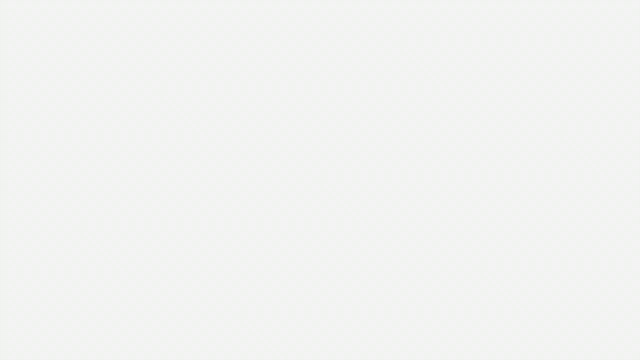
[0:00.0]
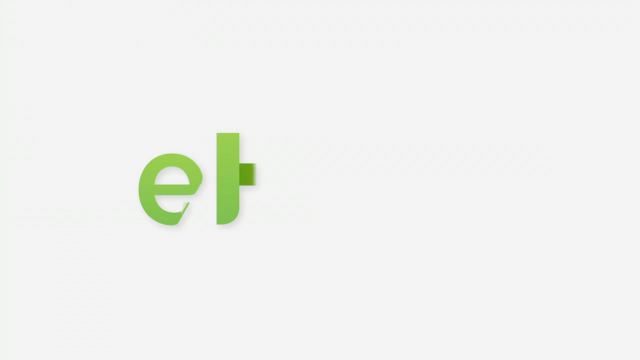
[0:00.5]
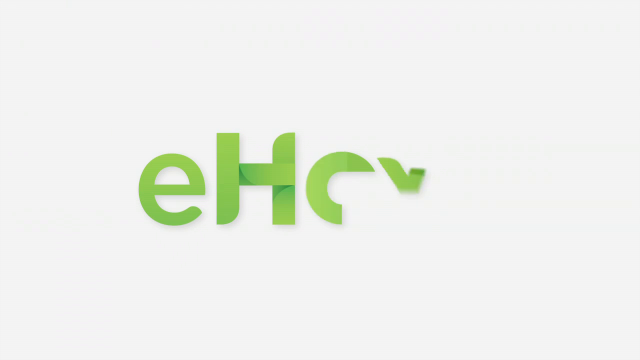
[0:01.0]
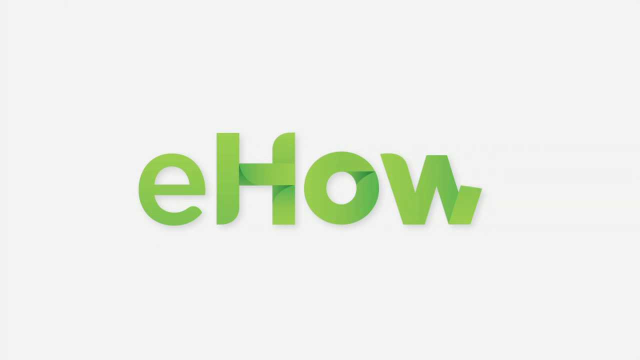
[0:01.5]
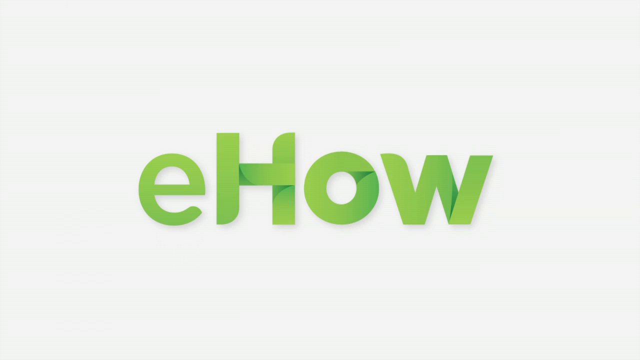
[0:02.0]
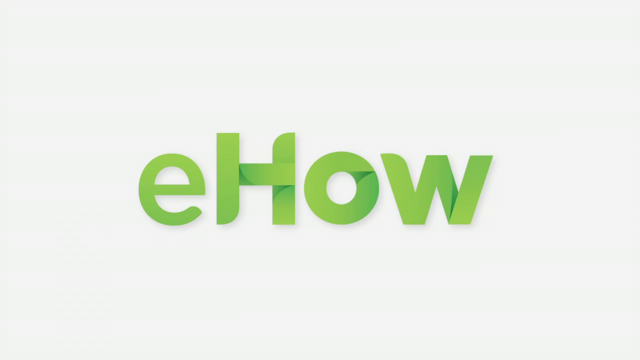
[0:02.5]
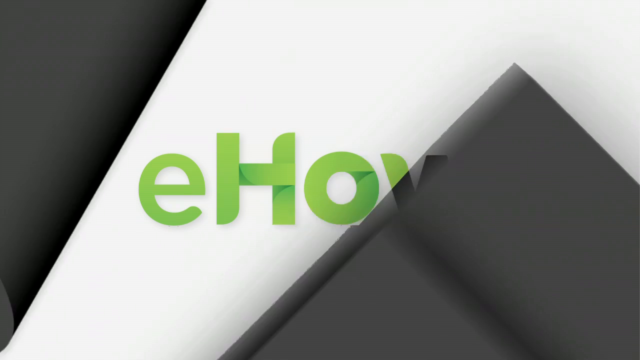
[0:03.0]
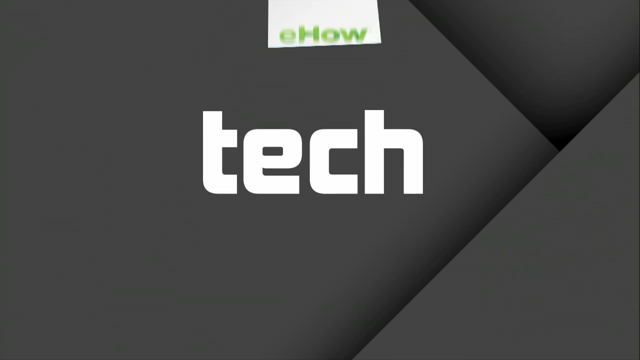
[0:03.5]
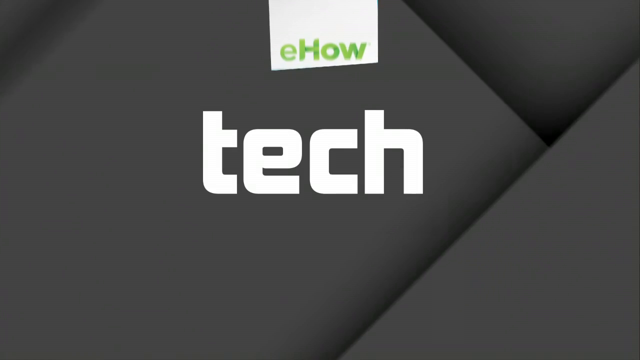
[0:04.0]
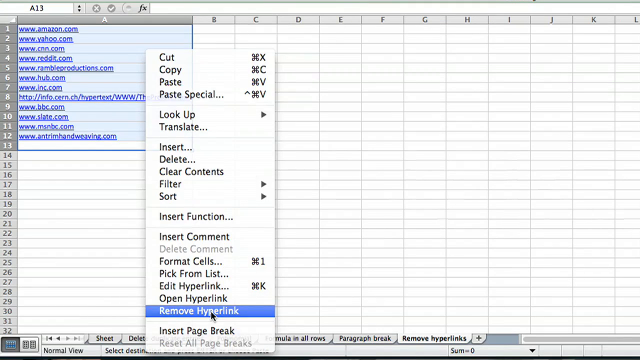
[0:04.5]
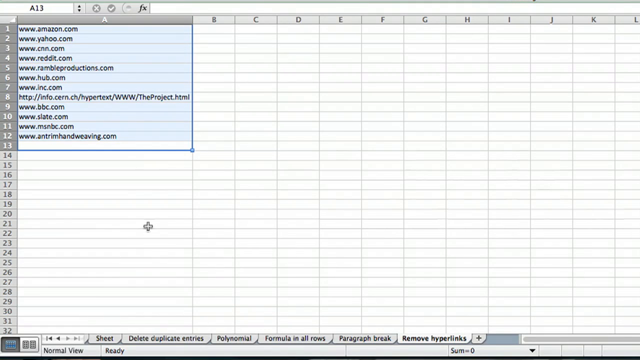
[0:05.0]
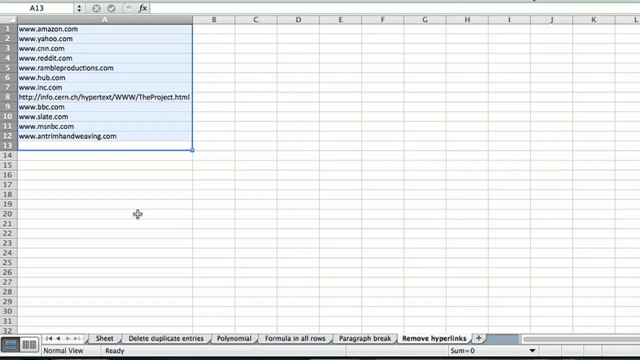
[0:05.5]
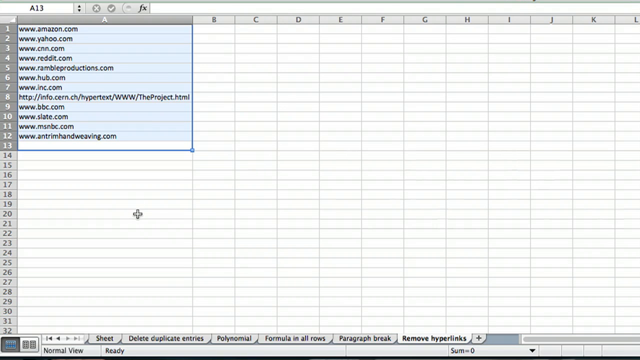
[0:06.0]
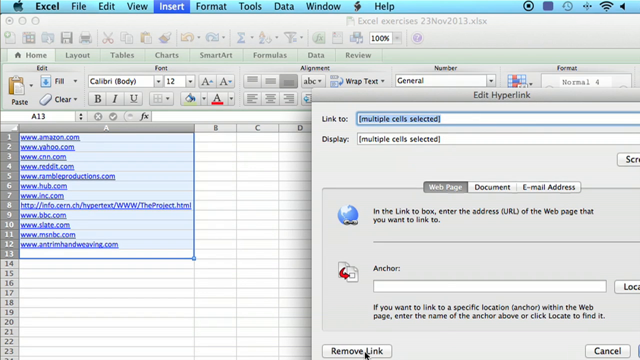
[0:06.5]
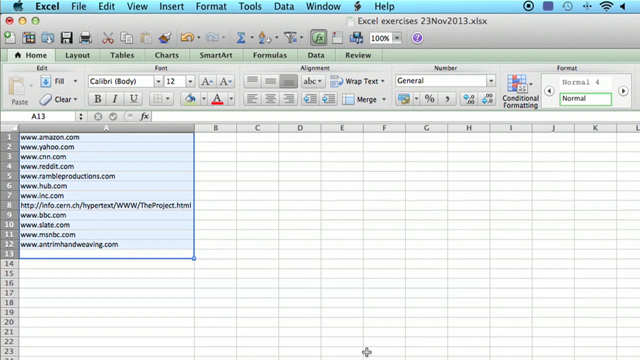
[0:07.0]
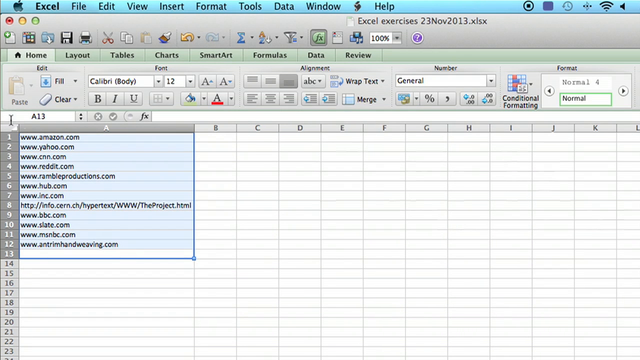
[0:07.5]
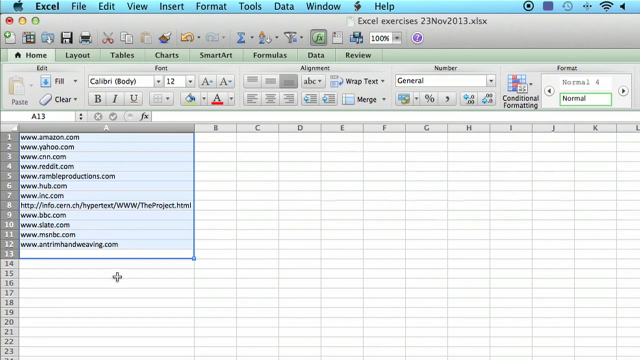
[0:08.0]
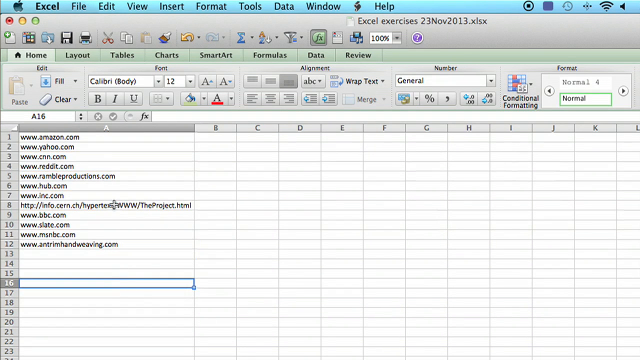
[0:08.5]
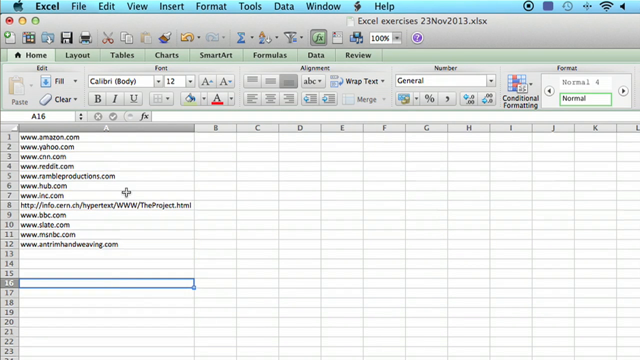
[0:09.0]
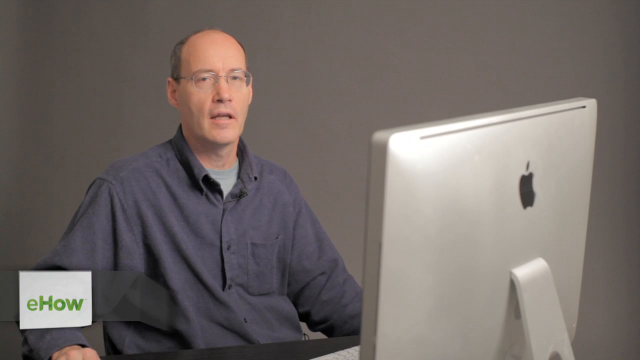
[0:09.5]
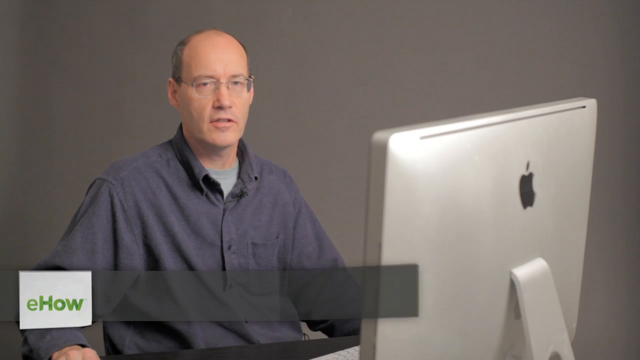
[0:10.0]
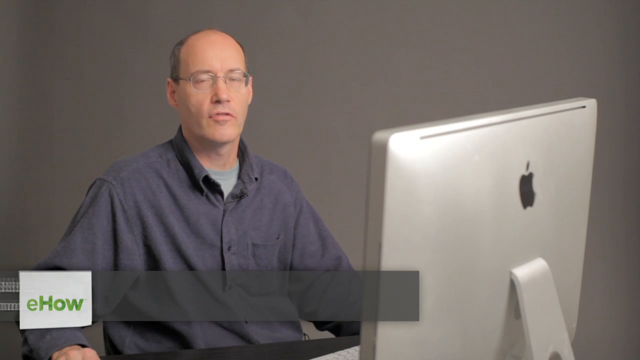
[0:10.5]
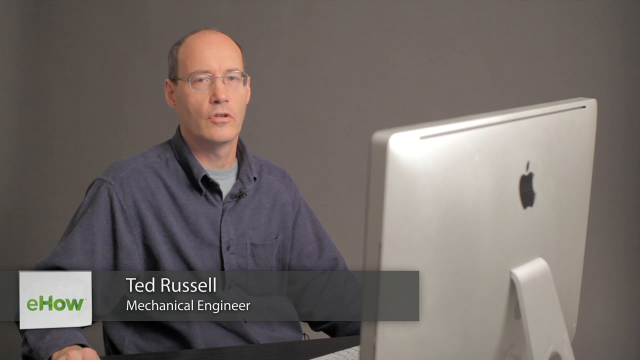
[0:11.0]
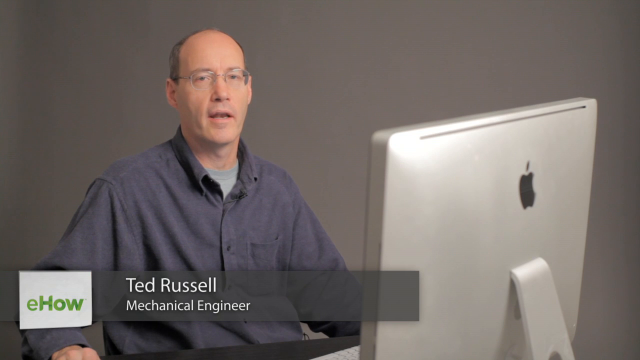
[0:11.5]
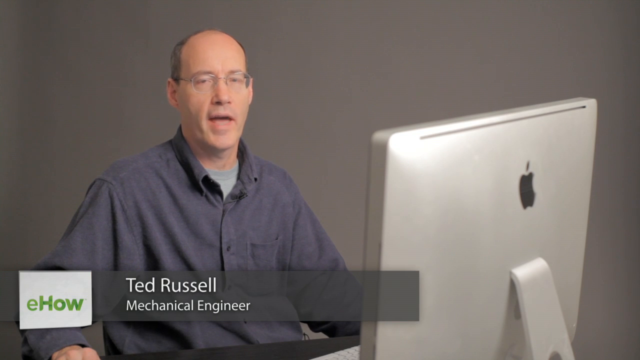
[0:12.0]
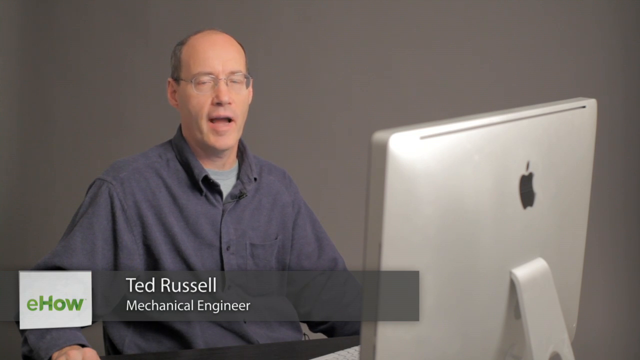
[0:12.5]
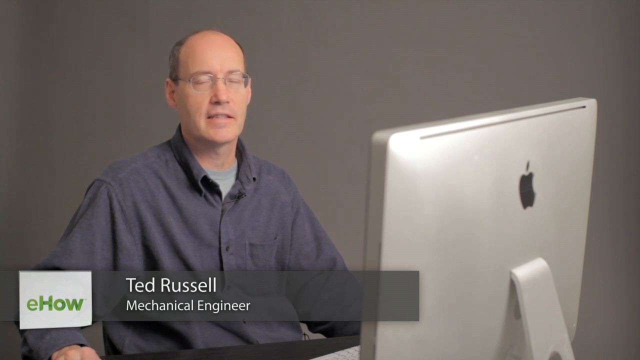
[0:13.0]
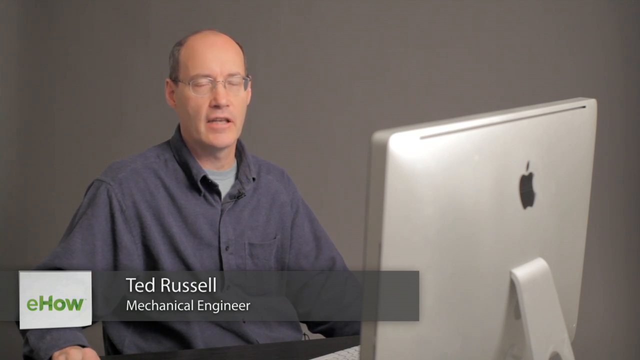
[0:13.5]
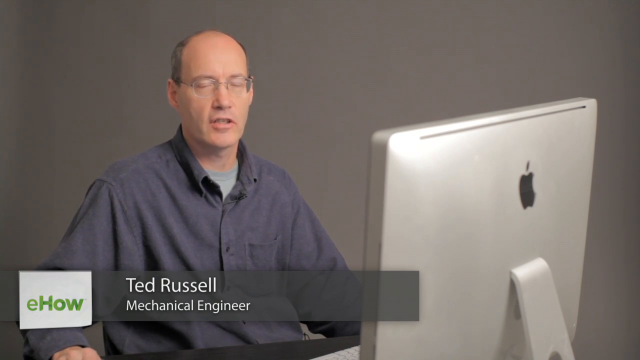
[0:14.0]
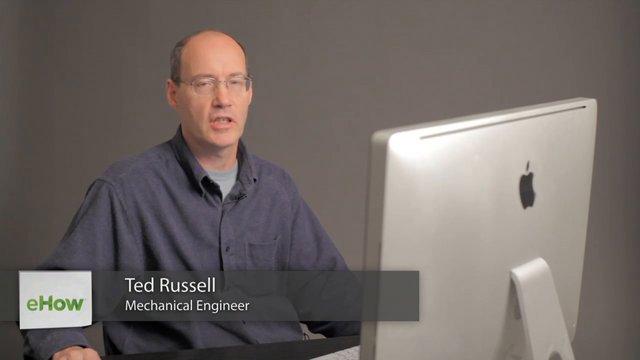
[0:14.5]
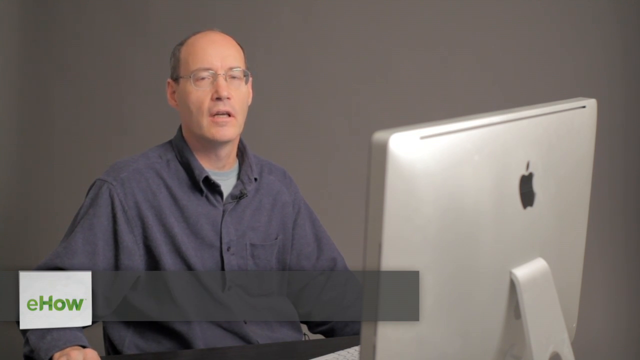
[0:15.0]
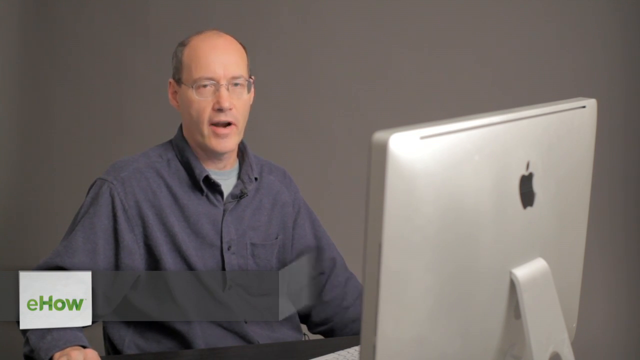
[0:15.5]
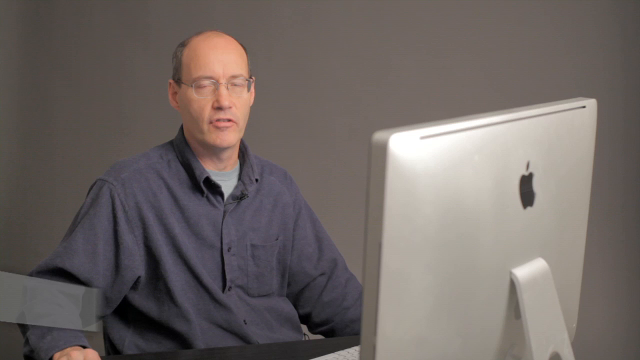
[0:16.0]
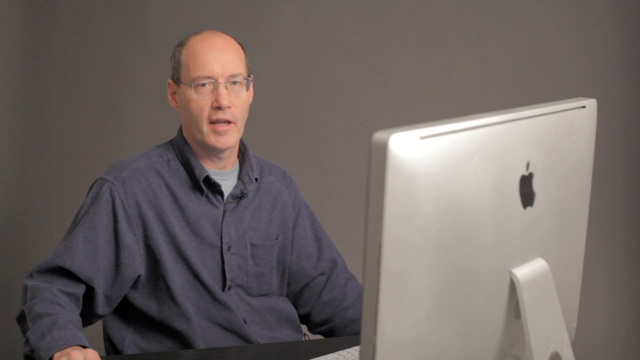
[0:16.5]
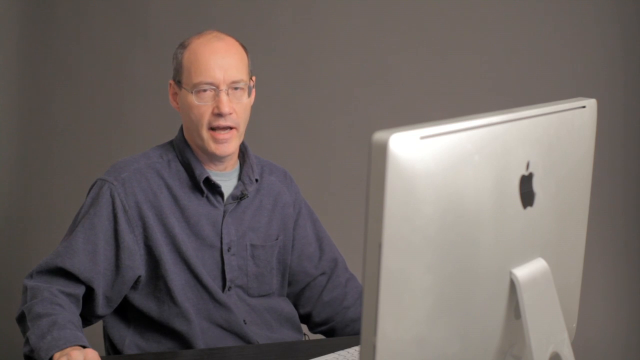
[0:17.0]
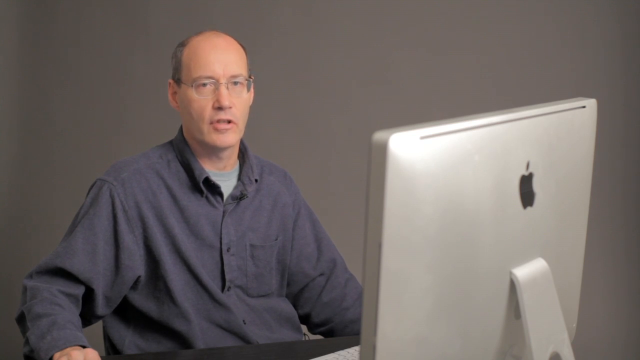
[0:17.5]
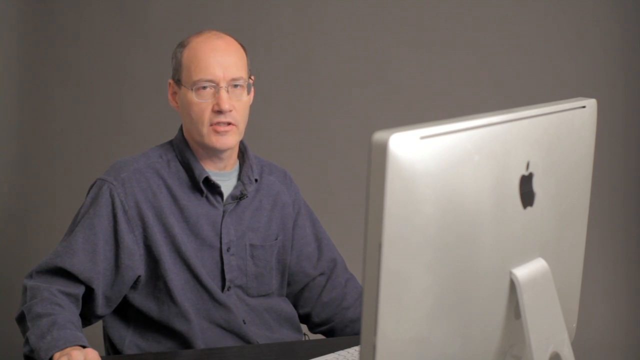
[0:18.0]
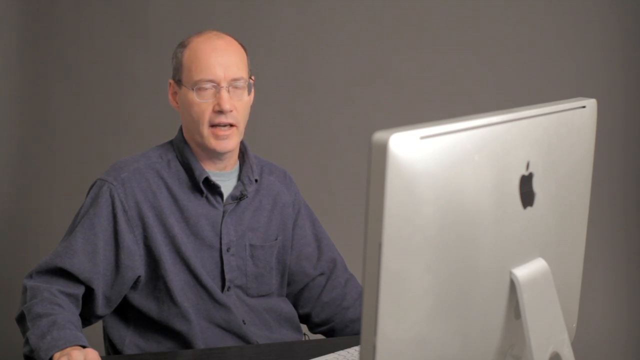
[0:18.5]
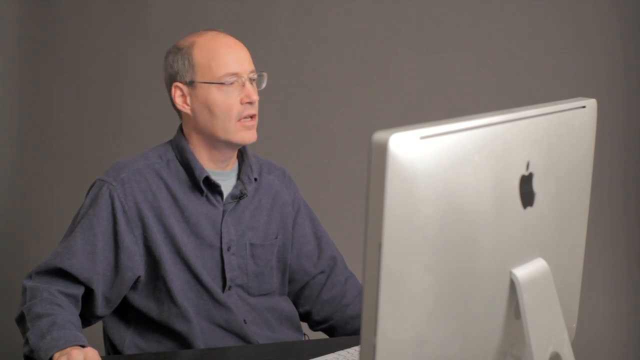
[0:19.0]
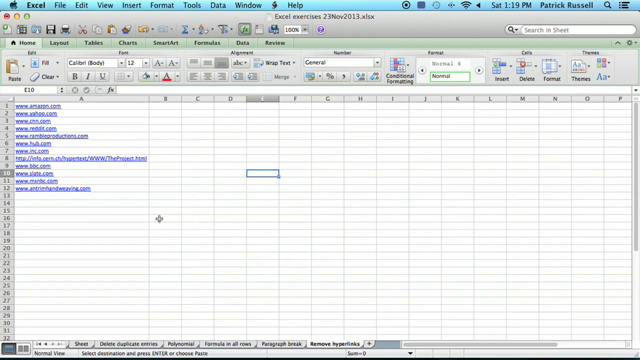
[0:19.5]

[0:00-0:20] The video opens on a solid gray screen, where letters that look like folded paper form the word "eHow" across the screen. This stays for a second, then the screen shifts: a small eHow message moves to the very top, and overlapping boxes with a big word appear in the center. It quickly switches to a chart, a spreadsheet listing Amazon.com, Yahoo.com, CNN.com and other web addresses on up to 13 lines. The author moves his mouse around and shows that clicking the spreadsheet did something. The scene then switches to the author himself, Ted Russell, a mechanical engineer, who talks while the spreadsheet is shown.